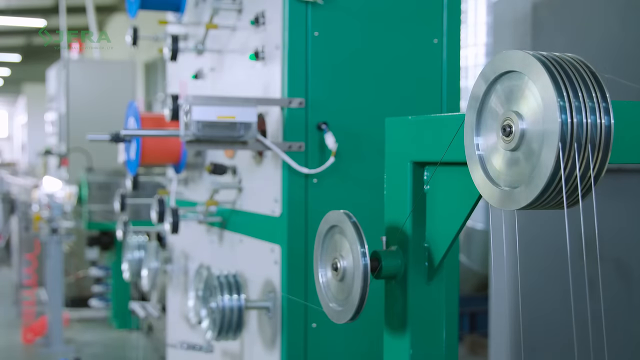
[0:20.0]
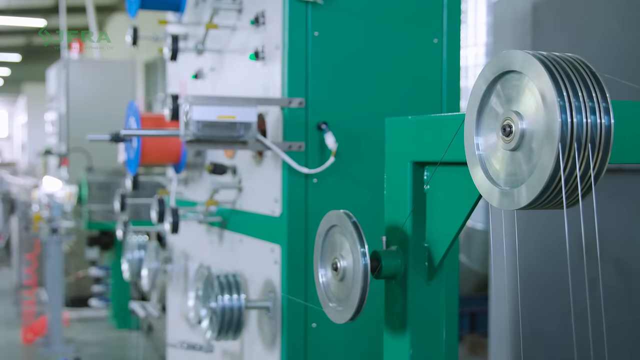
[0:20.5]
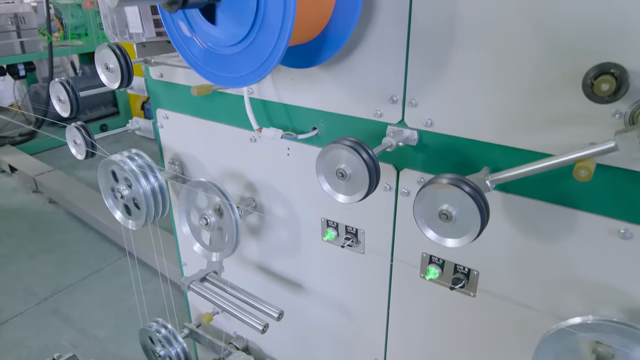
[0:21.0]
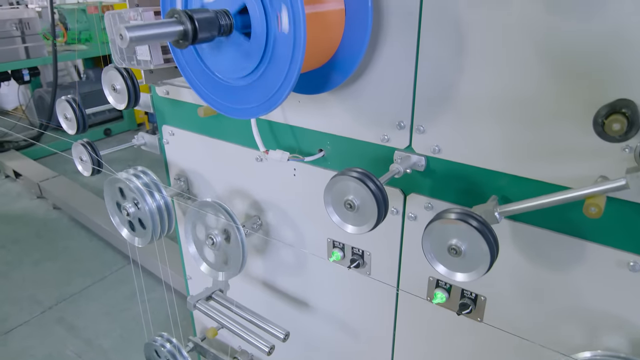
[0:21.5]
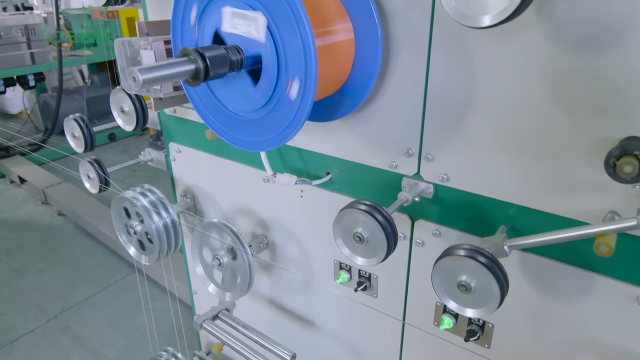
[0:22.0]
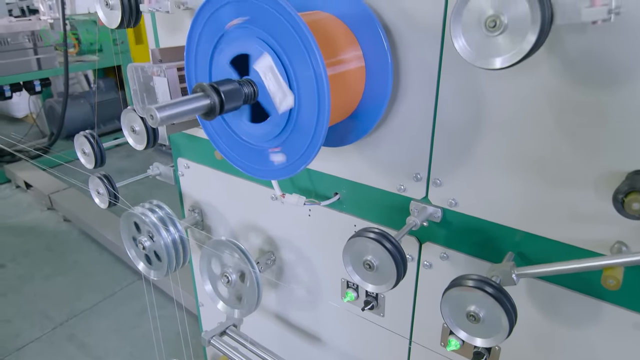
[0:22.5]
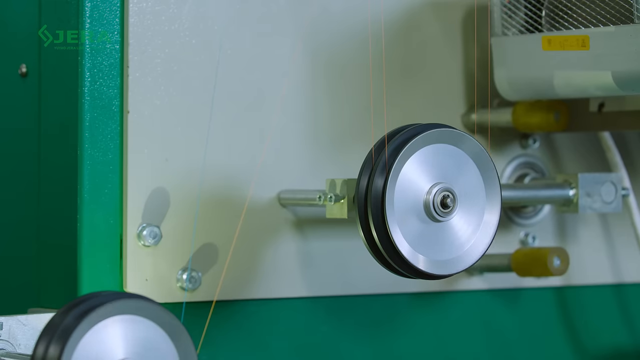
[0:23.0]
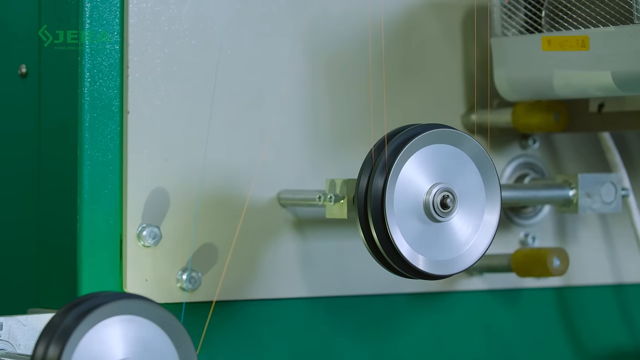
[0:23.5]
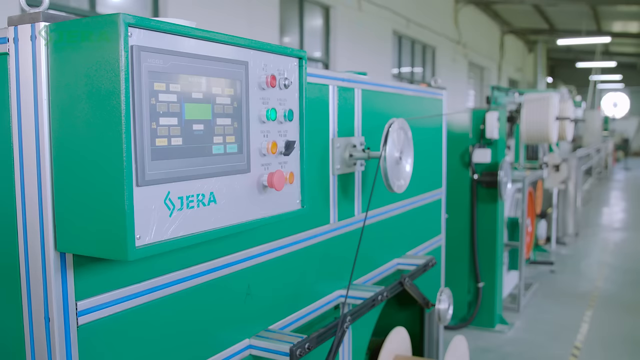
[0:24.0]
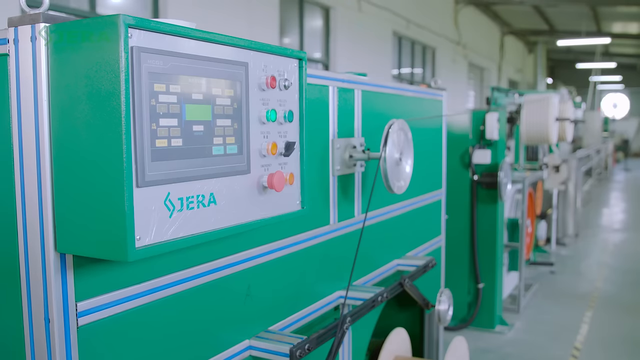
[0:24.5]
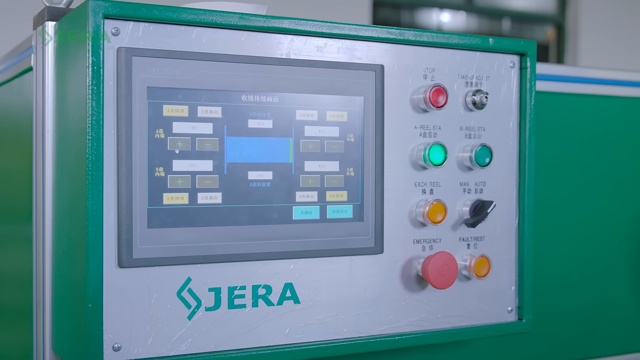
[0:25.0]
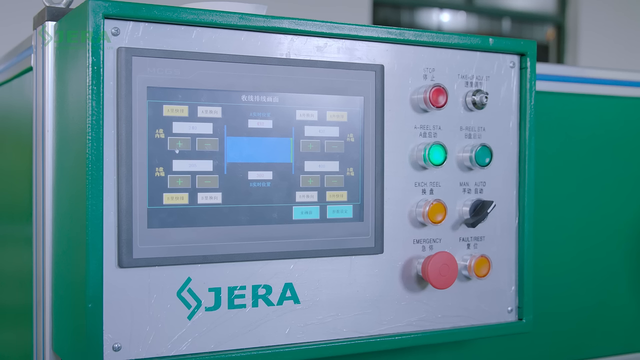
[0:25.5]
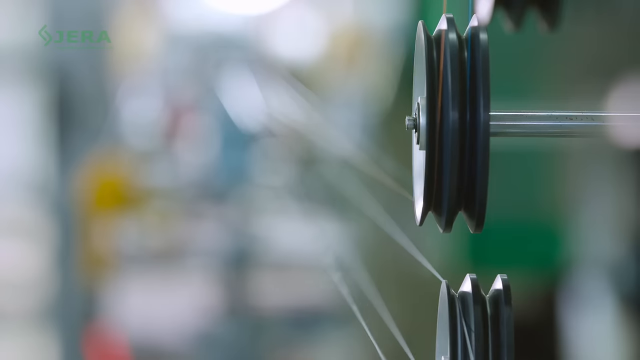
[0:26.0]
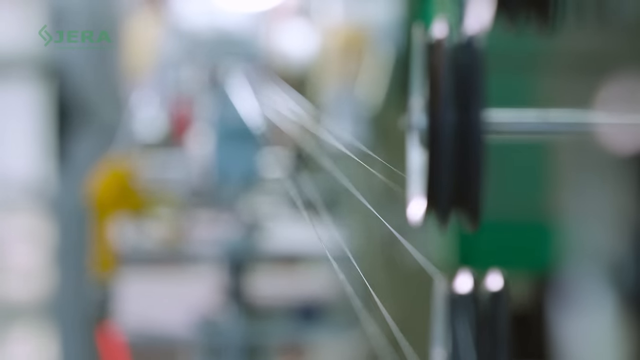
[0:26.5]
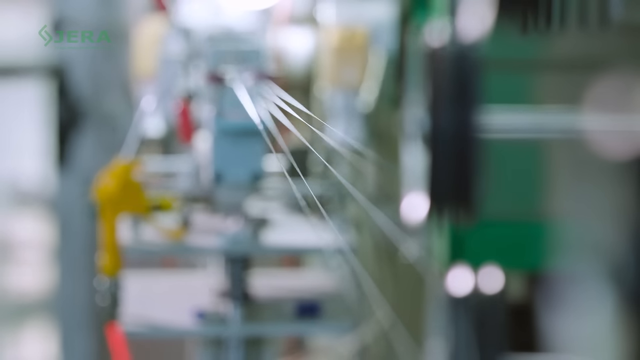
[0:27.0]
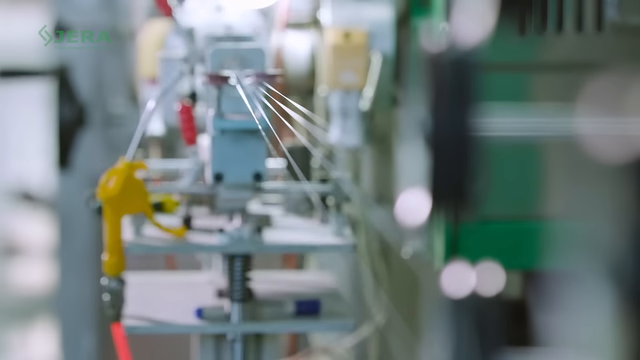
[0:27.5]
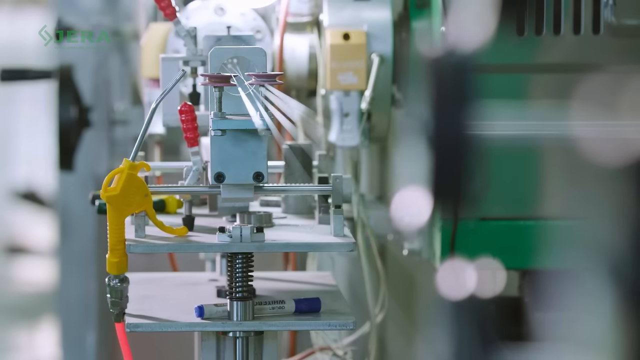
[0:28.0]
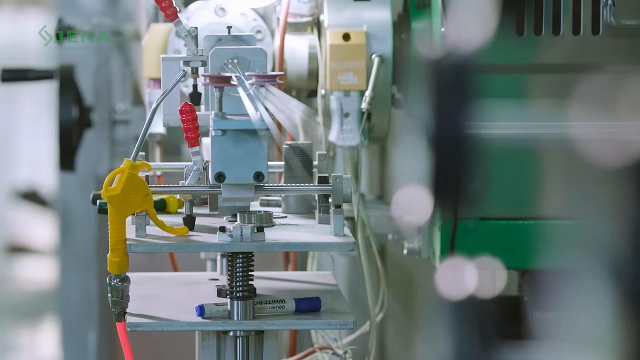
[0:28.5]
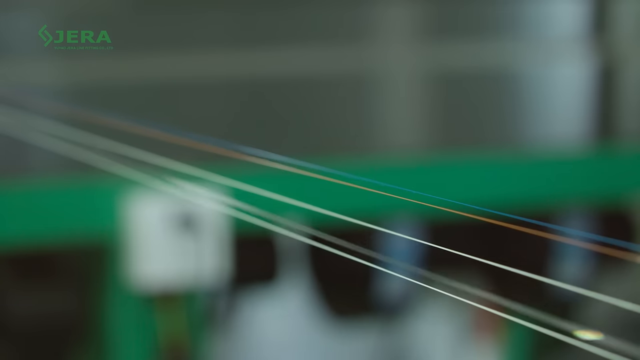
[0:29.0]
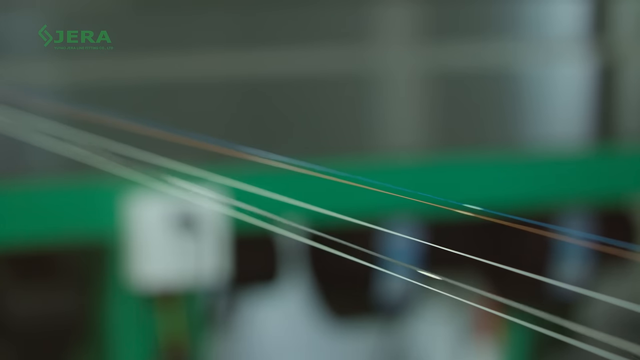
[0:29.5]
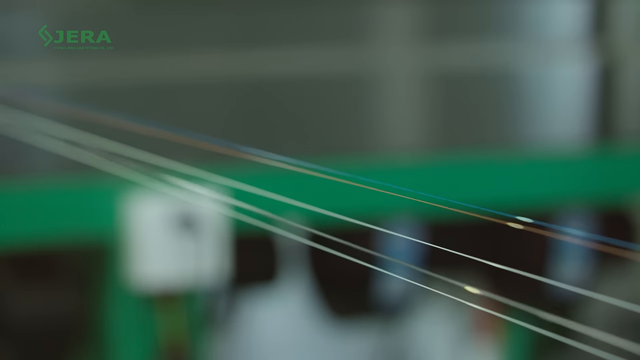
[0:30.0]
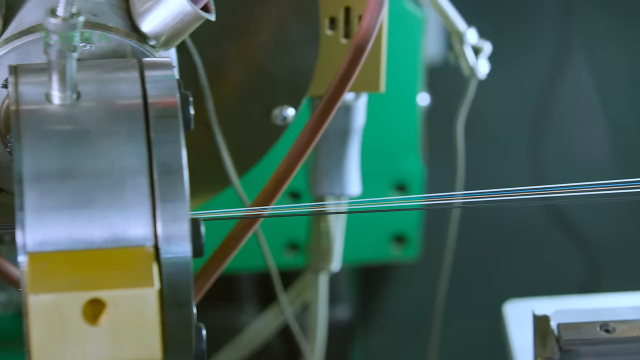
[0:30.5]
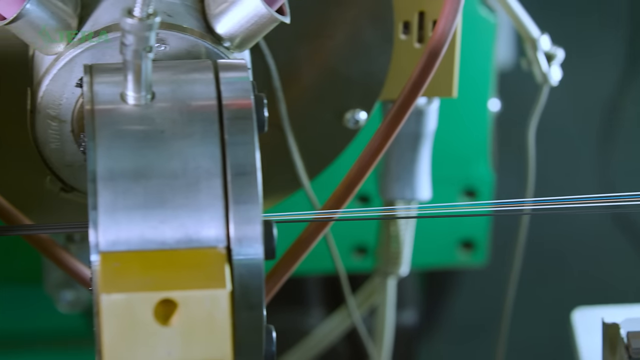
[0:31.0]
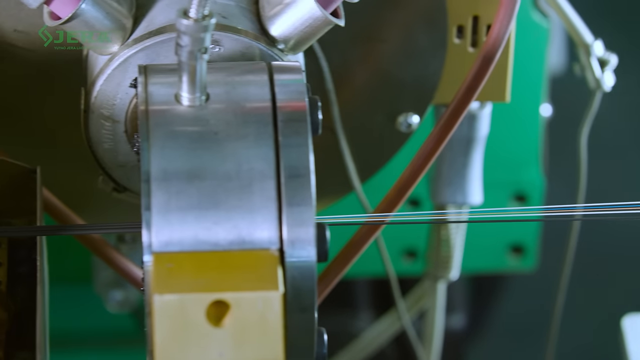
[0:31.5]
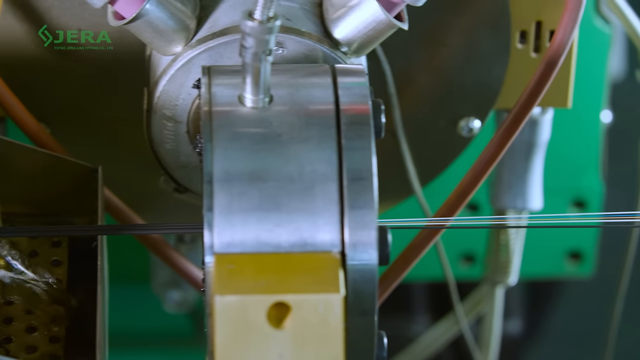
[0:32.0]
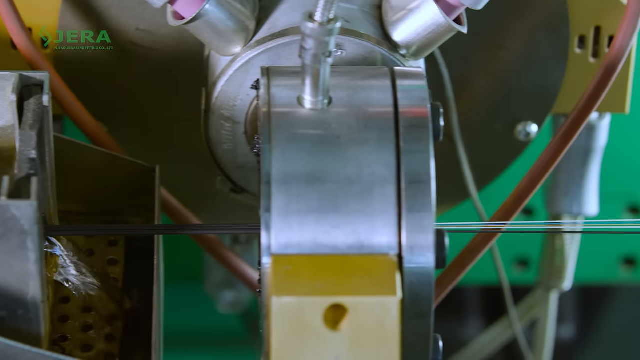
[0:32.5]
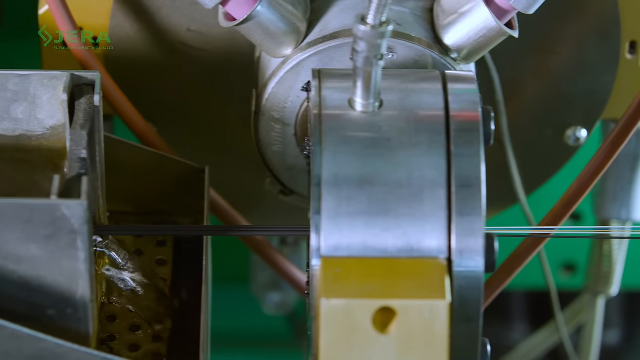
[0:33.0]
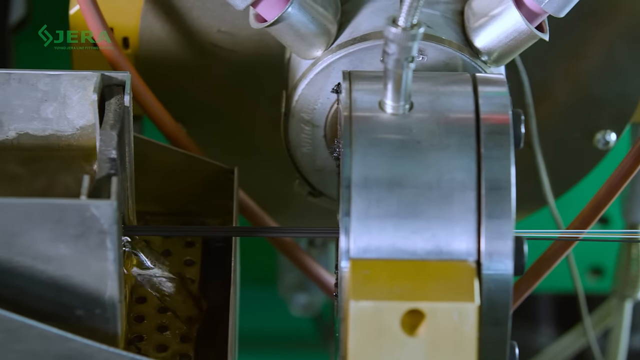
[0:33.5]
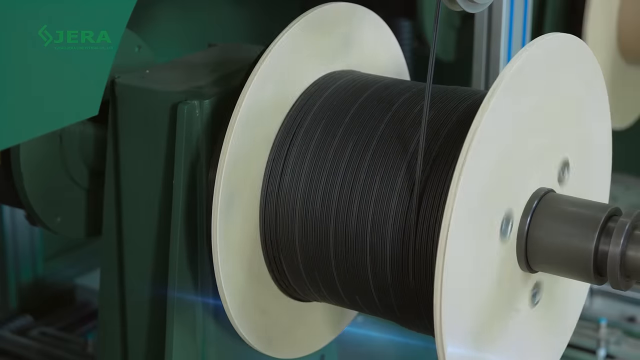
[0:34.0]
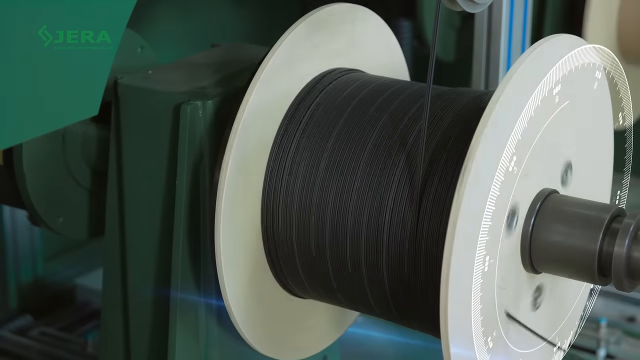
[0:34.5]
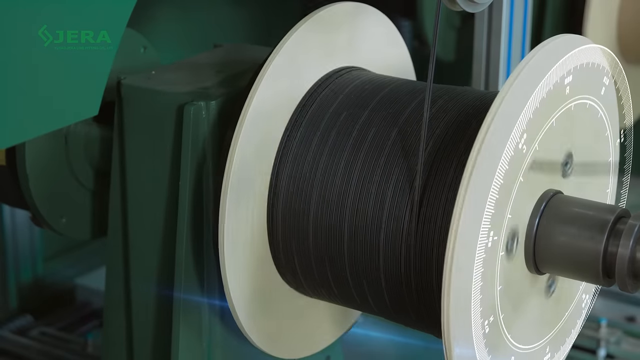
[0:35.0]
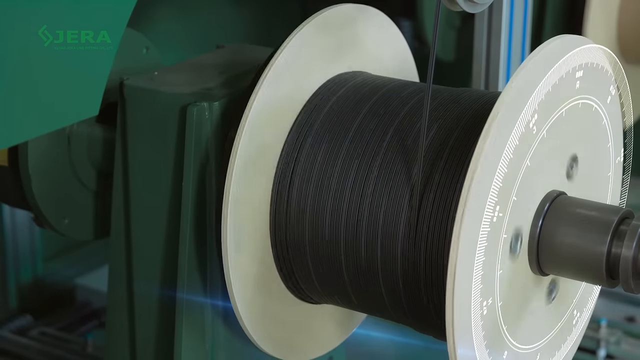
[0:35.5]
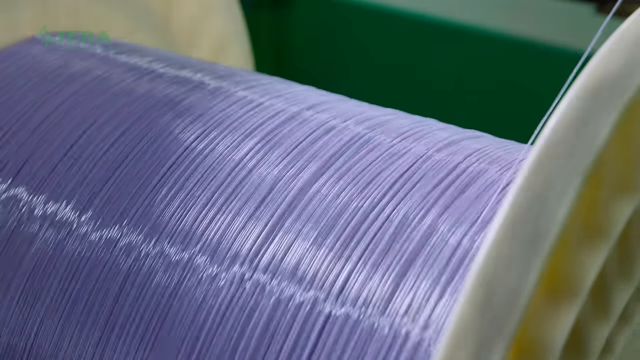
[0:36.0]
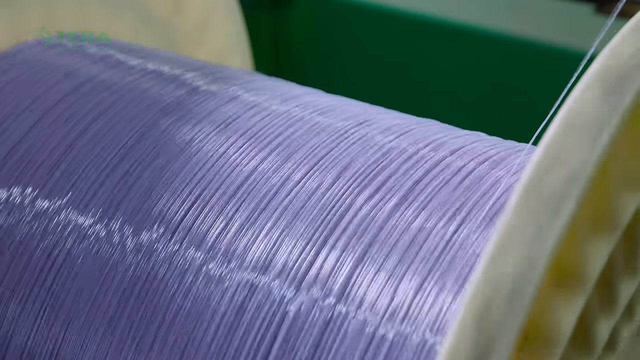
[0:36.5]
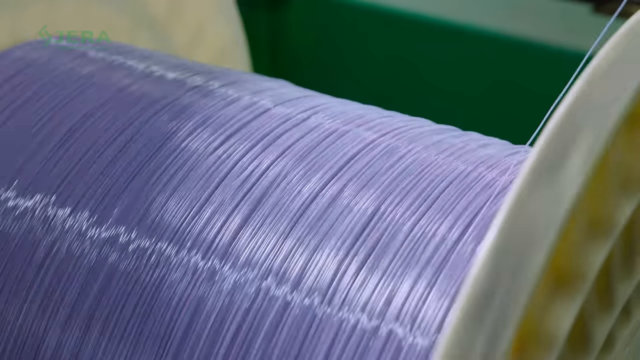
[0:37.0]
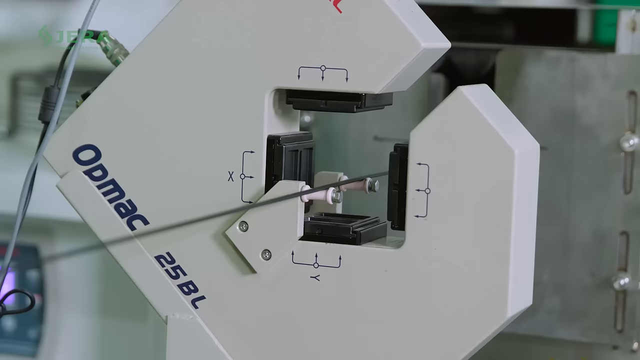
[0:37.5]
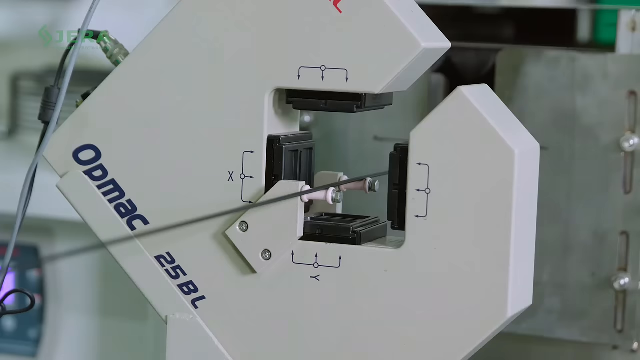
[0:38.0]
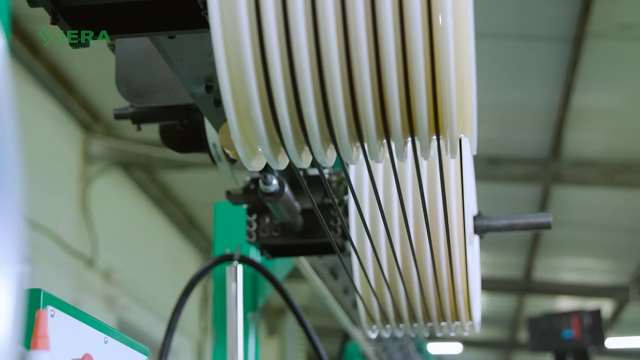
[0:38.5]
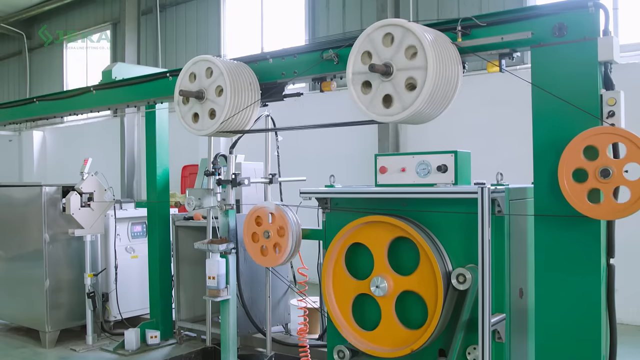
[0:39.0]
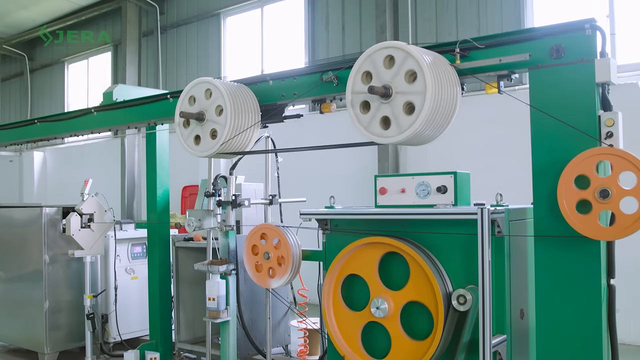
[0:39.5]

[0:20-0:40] The video continues with Jarrah's fiber optic cable manufacturing process, showing a series of machines with wire cable on them. One is a very large white machine that is like a spool, with black cable kind of circling around it. Another machine, greenish in color, has the name Jarrah on it and appears to extend the cables.